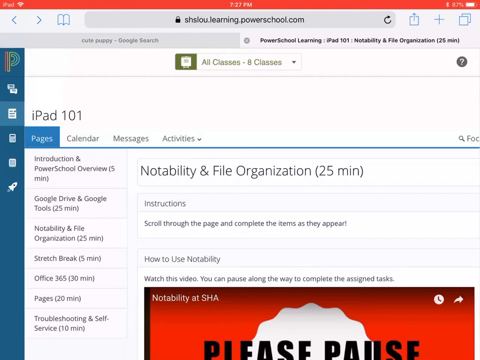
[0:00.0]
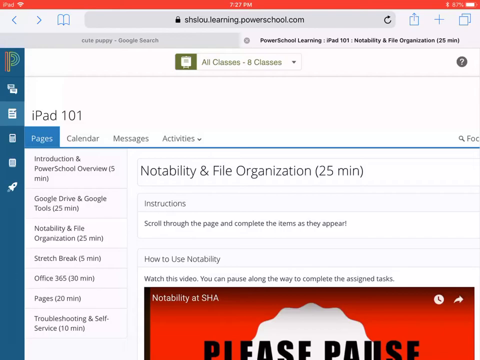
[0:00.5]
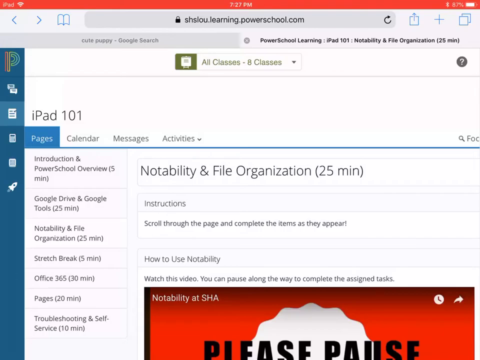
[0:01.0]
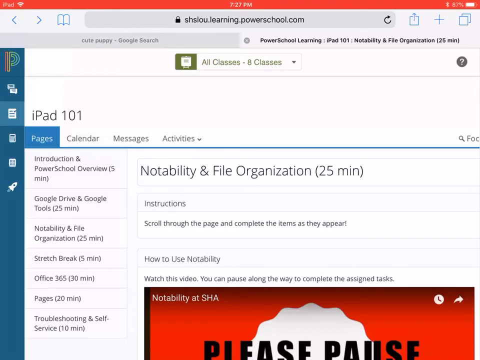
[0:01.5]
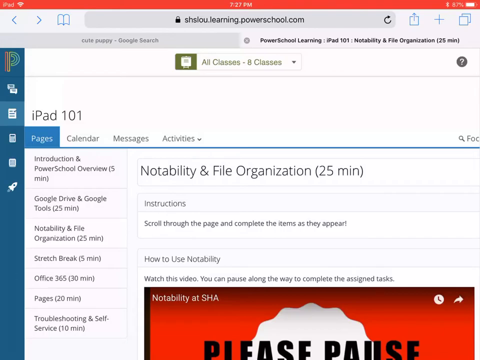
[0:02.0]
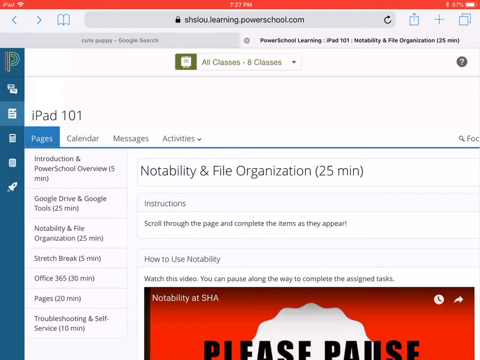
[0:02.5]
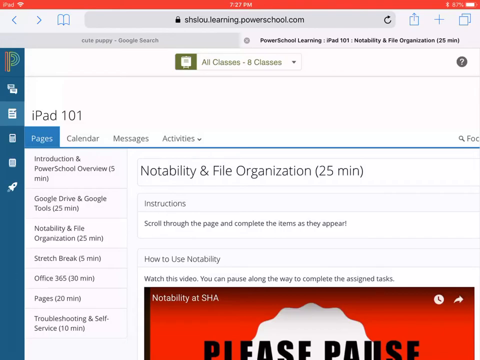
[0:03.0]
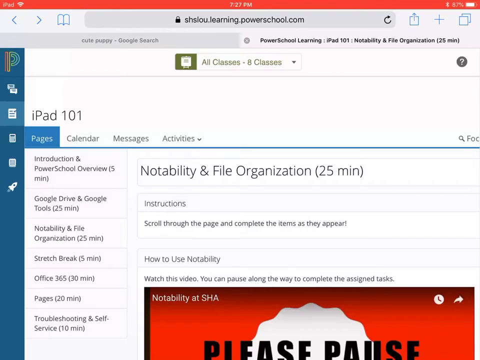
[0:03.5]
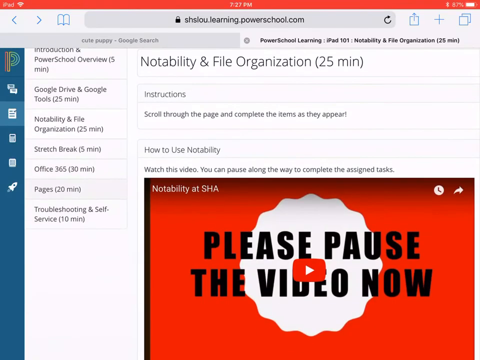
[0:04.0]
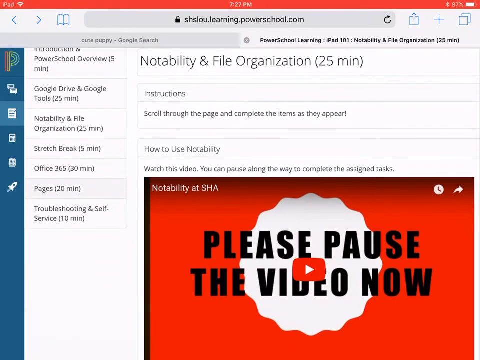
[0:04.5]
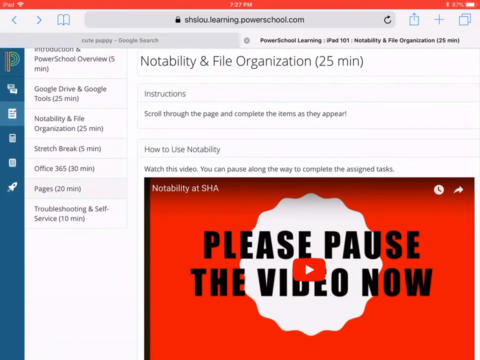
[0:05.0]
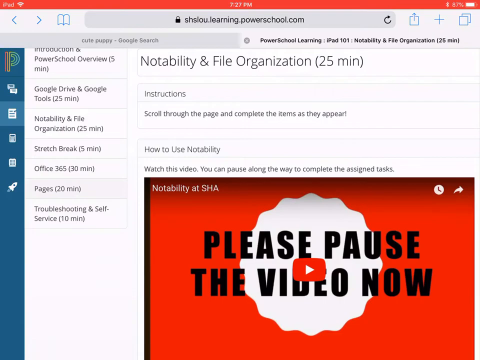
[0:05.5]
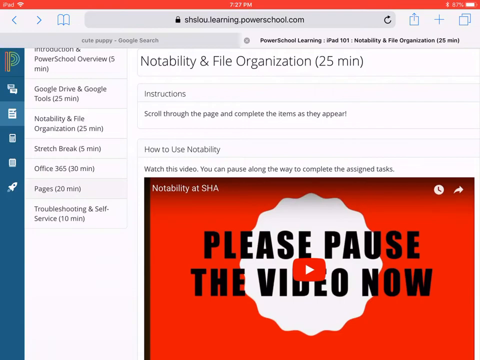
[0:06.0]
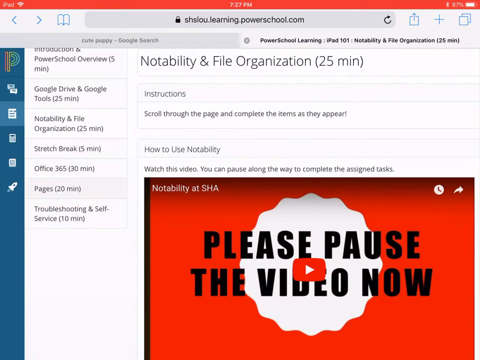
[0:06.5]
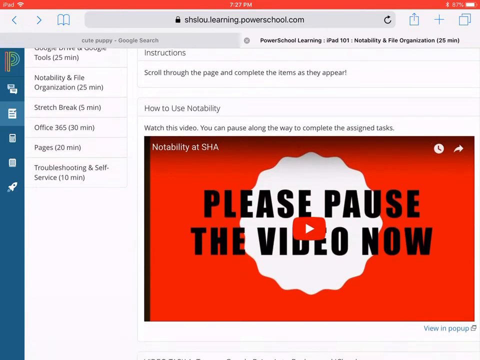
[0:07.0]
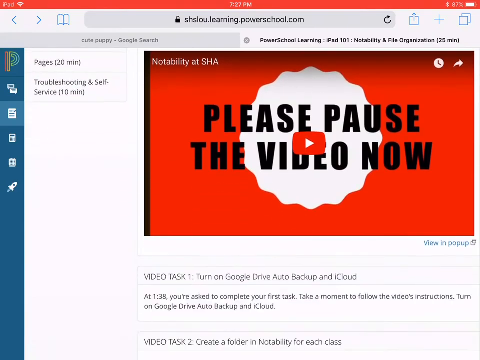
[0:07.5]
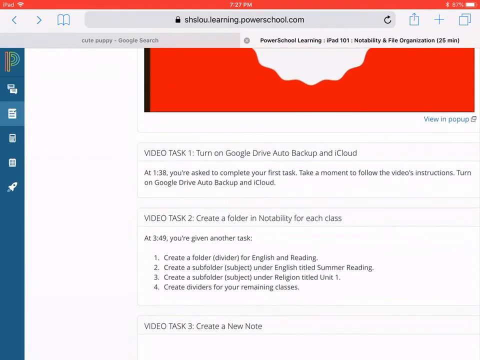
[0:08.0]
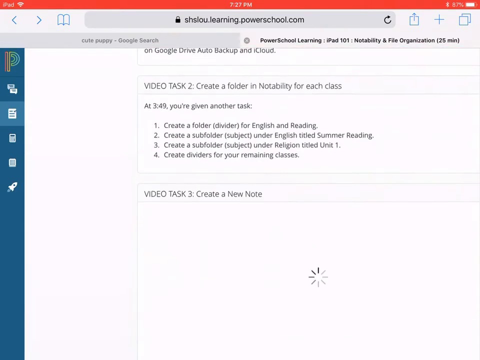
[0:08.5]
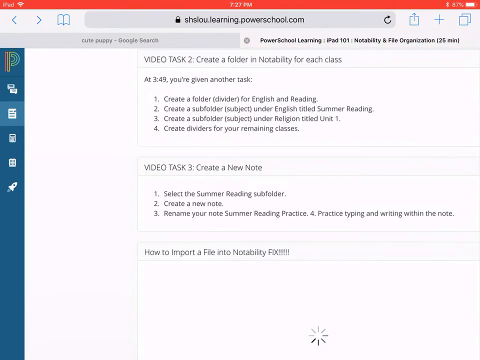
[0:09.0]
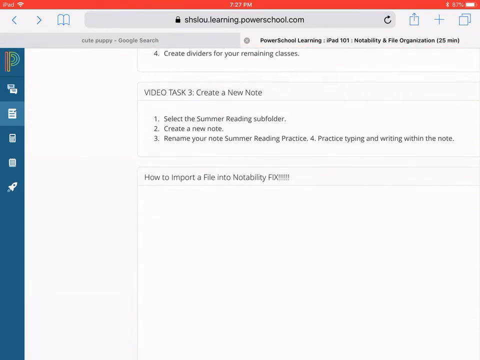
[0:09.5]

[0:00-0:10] A browser on an iPad has two tabs open. One is a Google search for "cute puppy", and the other, the tab visible on screen, is titled "Power School Learning, iPad 101, Notability and File Organisation (25 minutes)". The page appears to be some sort of tutorial or learning guide. On the left-hand side is a blue bar with menu icons, along with other menu items that seem to be lessons: "Introduction and Power School Overview" (five minutes), "Google Drive and Google Tools" (25 minutes), and the current one, "Notability and File Organisation" (25 minutes). The main body of the page holds a video titled "Notability at SHA", with an instruction to watch the video and pause along the way to complete the assigned tasks. The page then scrolls down.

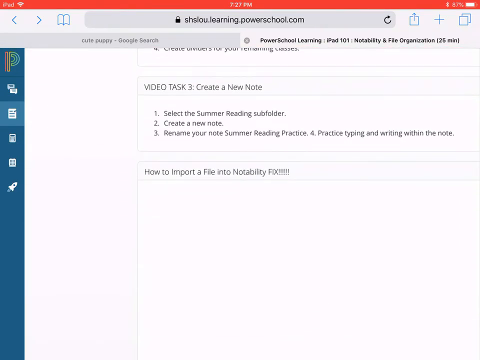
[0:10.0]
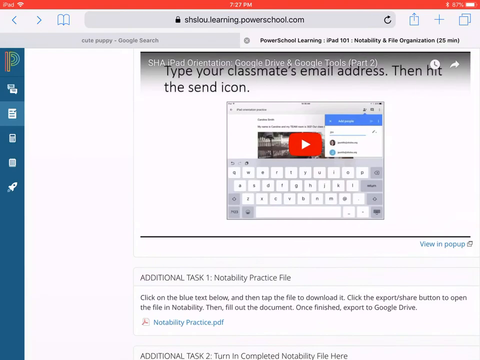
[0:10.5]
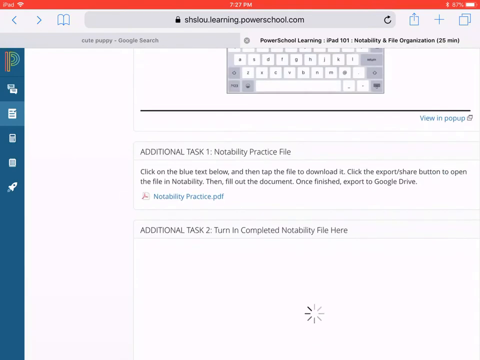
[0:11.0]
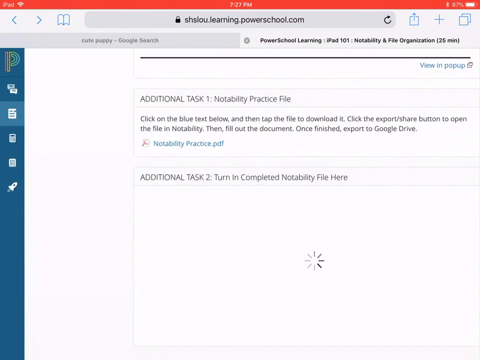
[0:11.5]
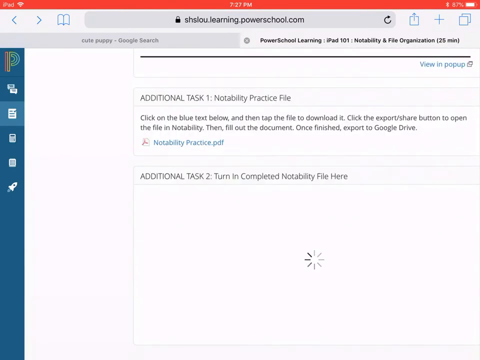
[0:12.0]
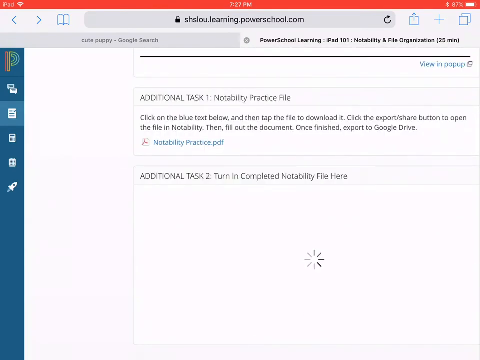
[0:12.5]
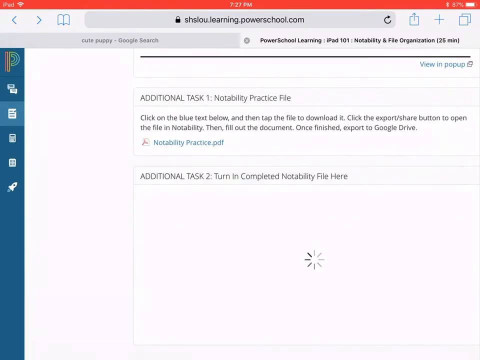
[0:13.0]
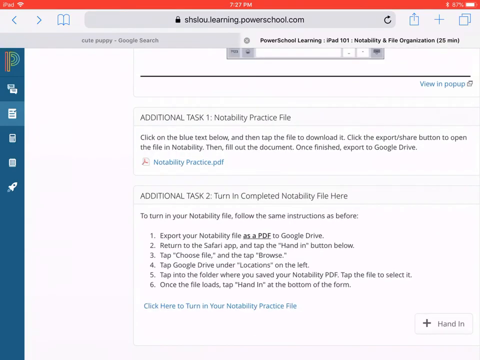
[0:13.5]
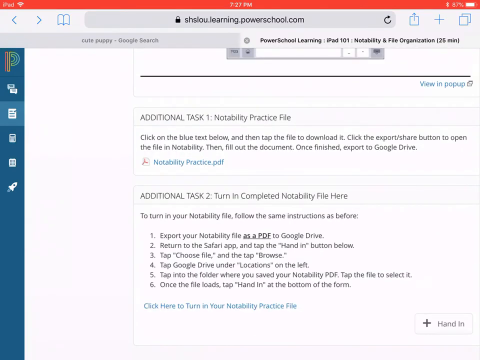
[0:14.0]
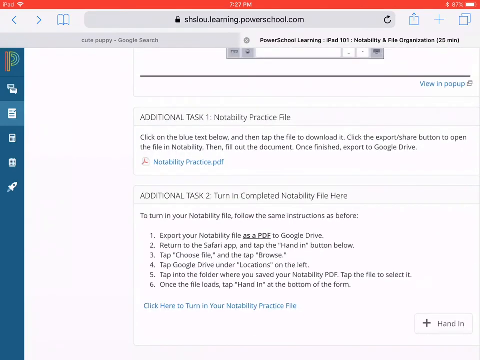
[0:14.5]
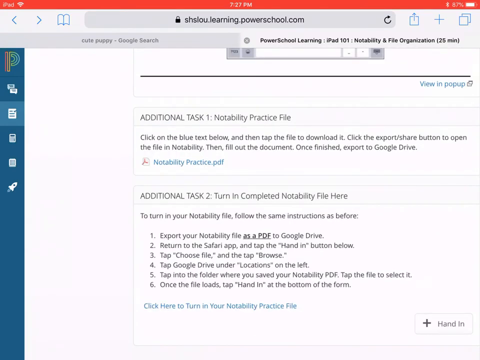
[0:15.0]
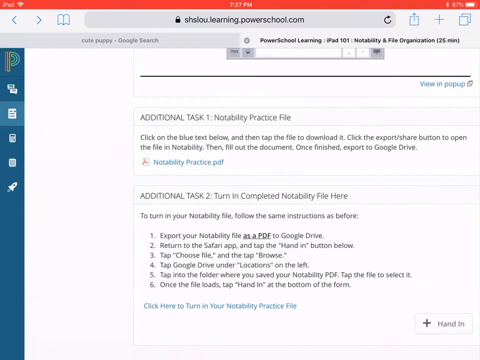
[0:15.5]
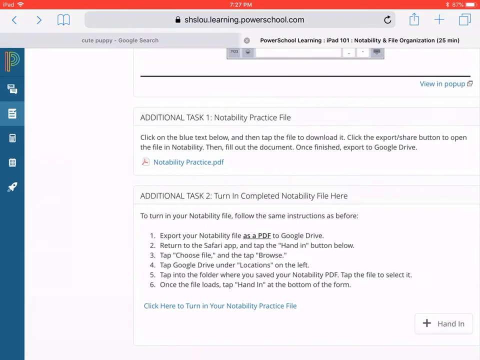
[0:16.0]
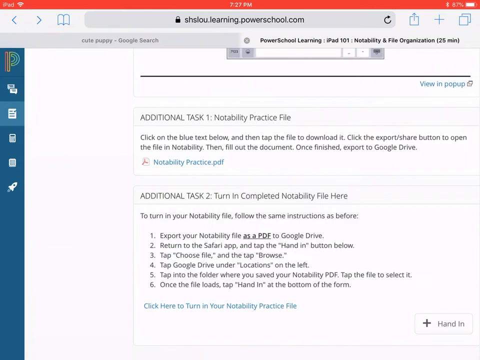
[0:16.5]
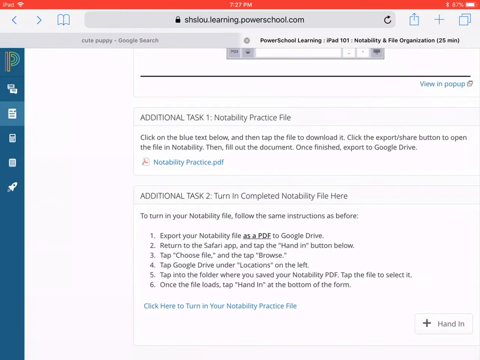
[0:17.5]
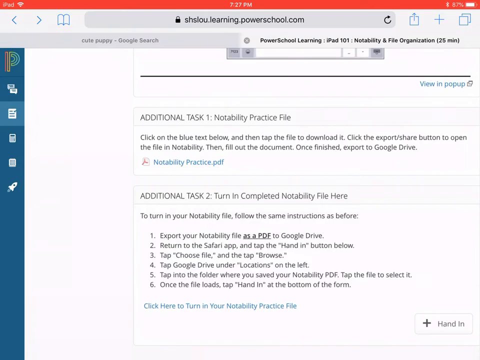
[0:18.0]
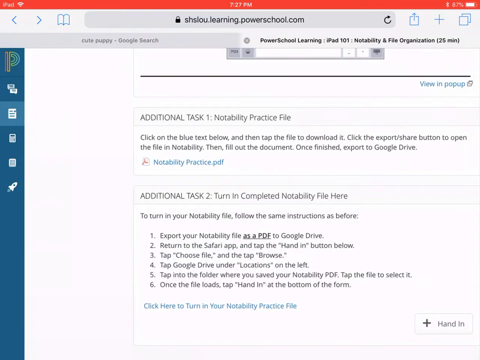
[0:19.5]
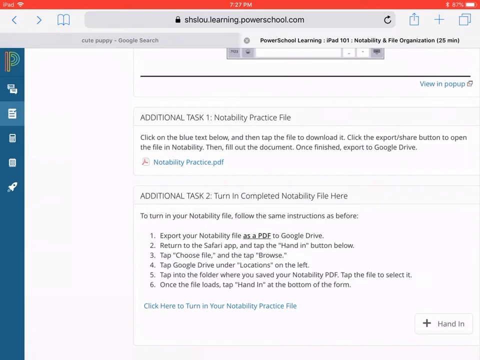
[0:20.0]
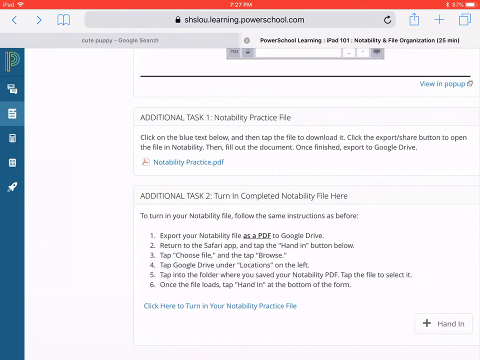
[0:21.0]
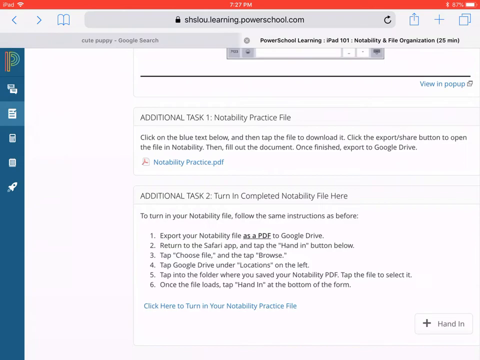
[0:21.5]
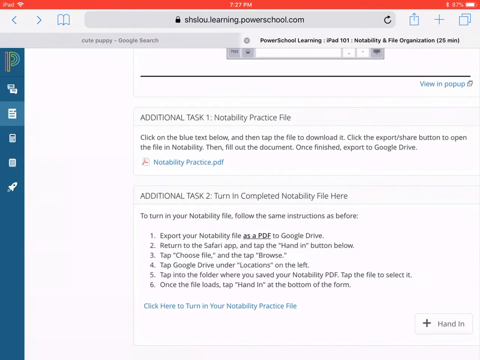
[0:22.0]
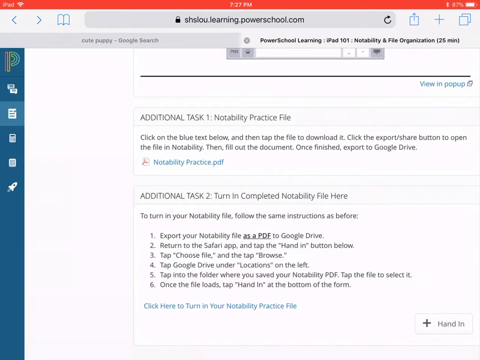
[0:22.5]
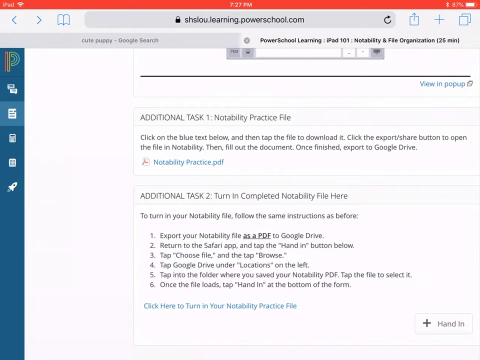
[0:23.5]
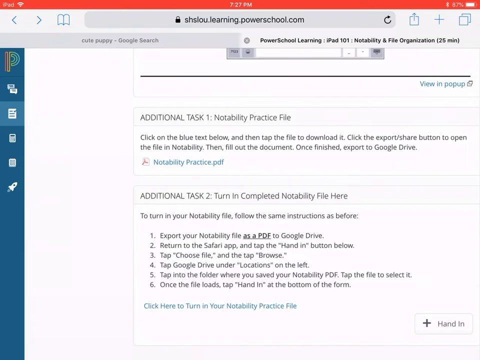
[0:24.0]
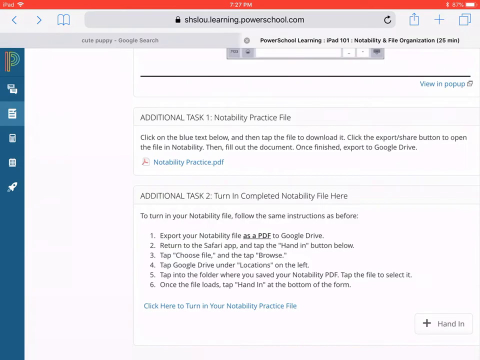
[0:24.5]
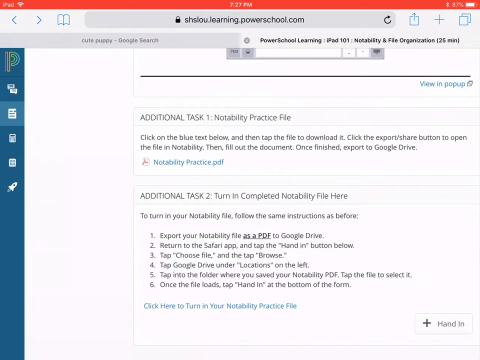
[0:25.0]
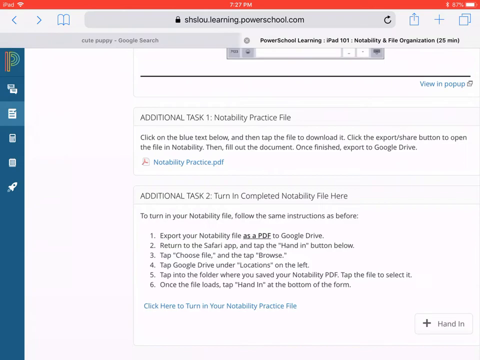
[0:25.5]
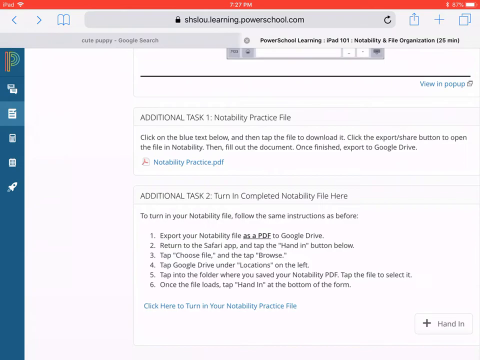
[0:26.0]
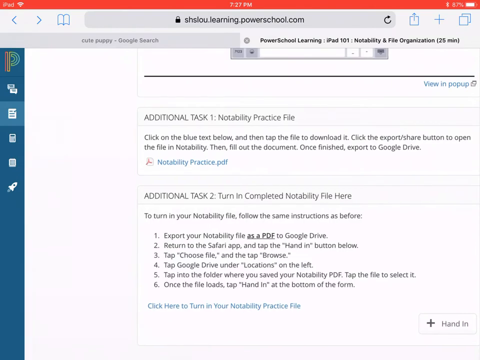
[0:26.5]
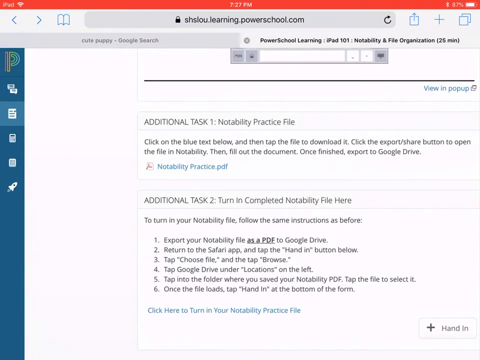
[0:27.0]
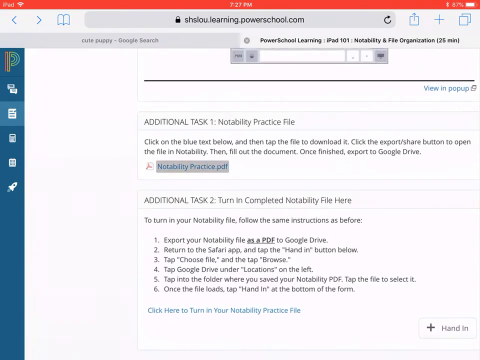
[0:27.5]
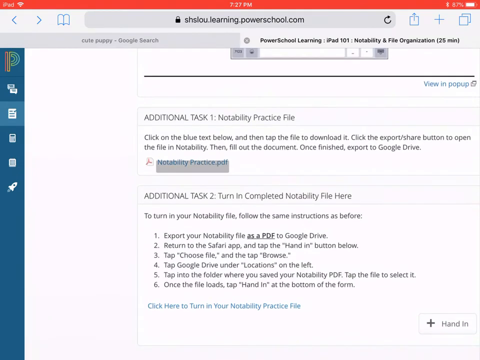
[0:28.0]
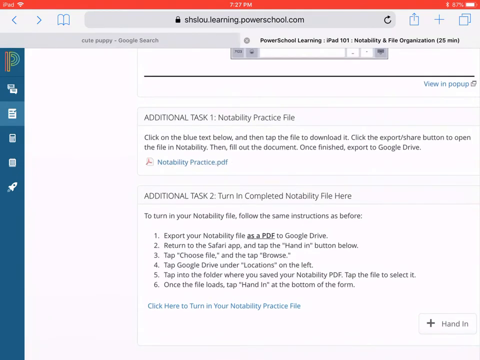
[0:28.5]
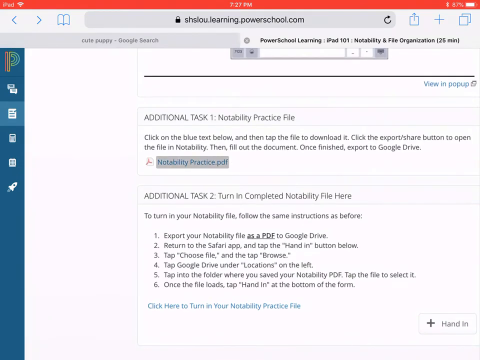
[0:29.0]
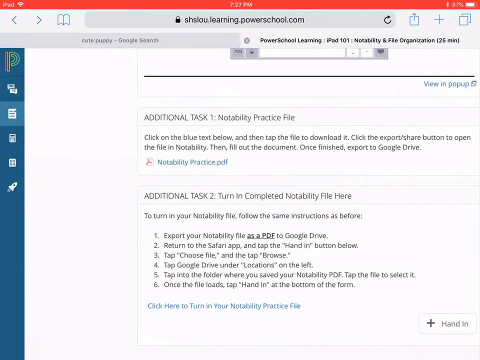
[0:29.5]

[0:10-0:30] The page keeps scrolling down past tasks one, two and three. Presumably further down, in somewhat jerky movement, it looks like the page scrolls past another video about how to import a file into Notability. Then "additional task one", a Notability practice file, and "additional task two", turn in completed Notability file here, come into view, and the screen stays on these two tasks for at least 10 seconds. The attachment on additional task one, "Notabilitypractice.pdf", is slightly highlighted, apparently for emphasis so the viewer notices the file. Additional task one is to download this file and fill it out; additional task two is to turn in or submit it, and there is a blue link under additional task two for doing so.